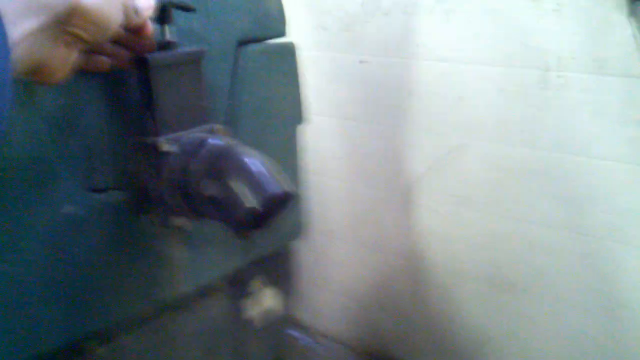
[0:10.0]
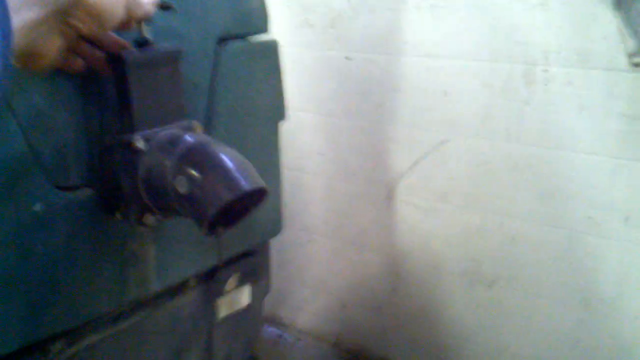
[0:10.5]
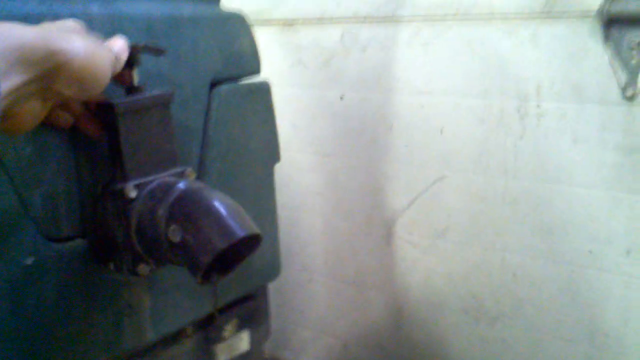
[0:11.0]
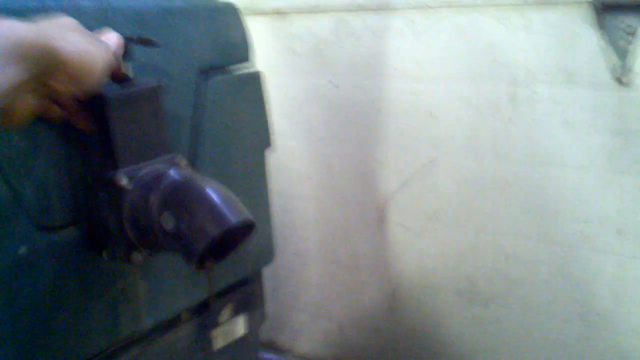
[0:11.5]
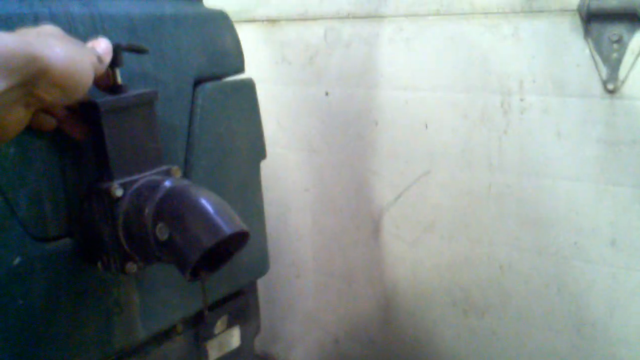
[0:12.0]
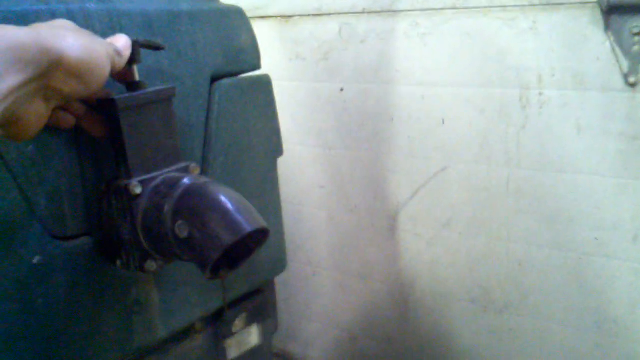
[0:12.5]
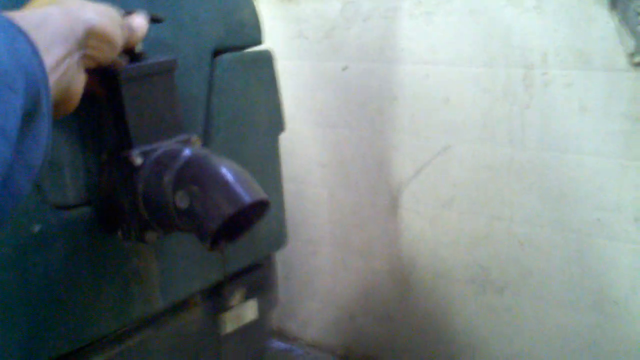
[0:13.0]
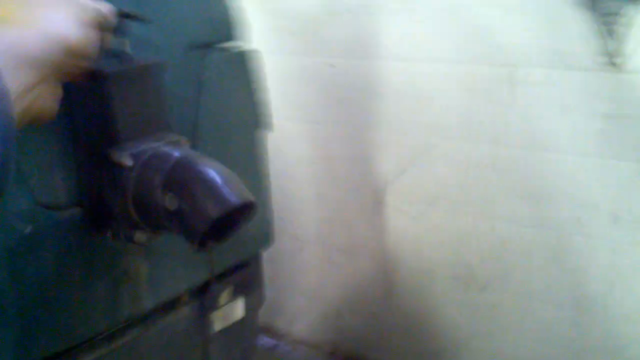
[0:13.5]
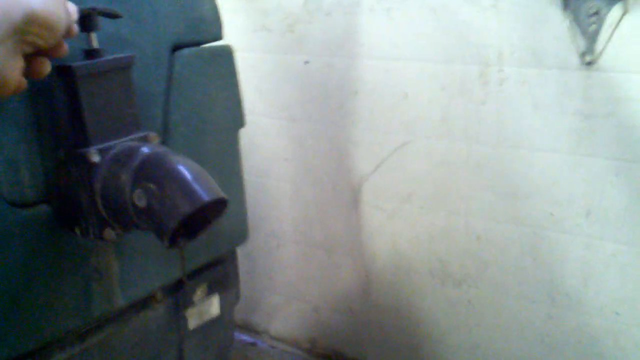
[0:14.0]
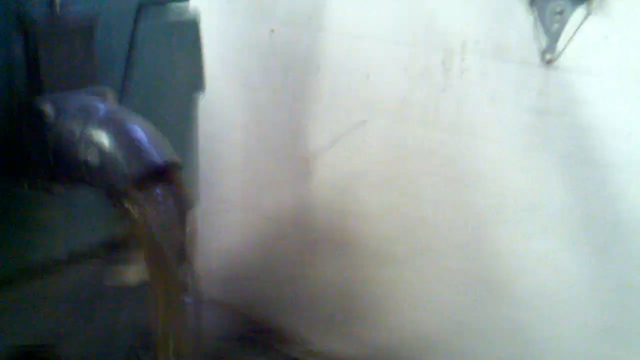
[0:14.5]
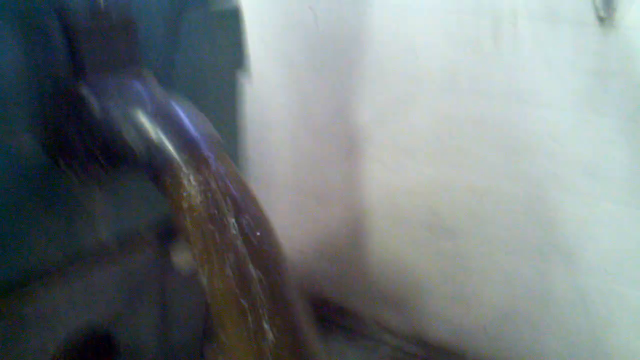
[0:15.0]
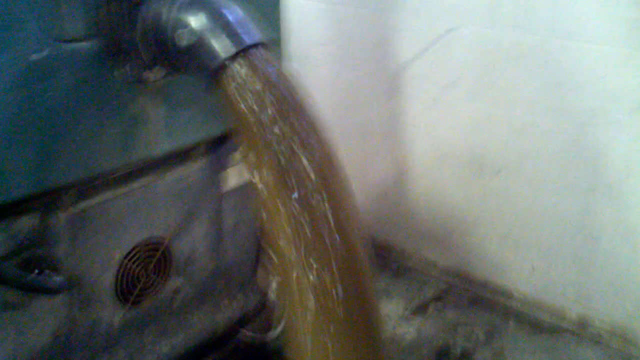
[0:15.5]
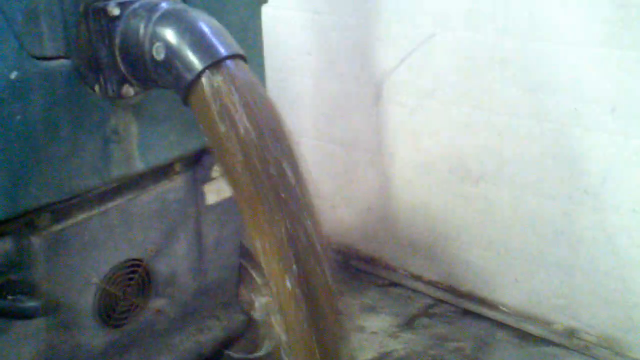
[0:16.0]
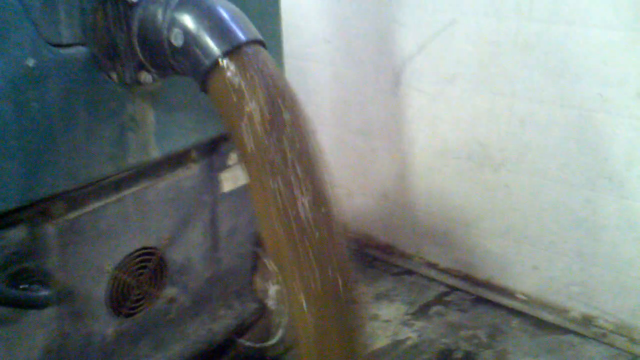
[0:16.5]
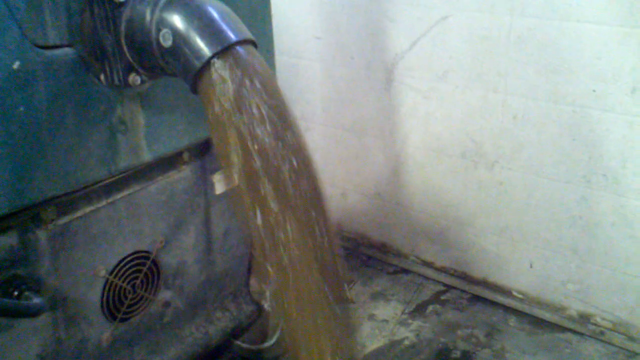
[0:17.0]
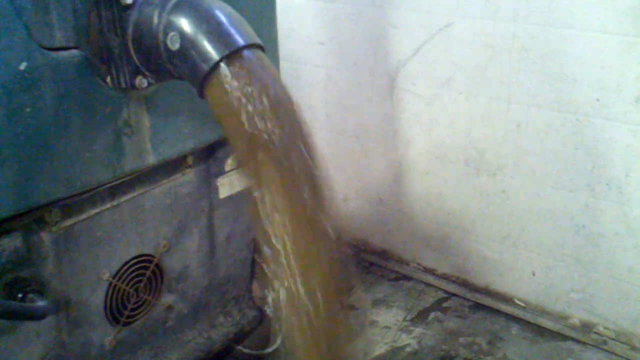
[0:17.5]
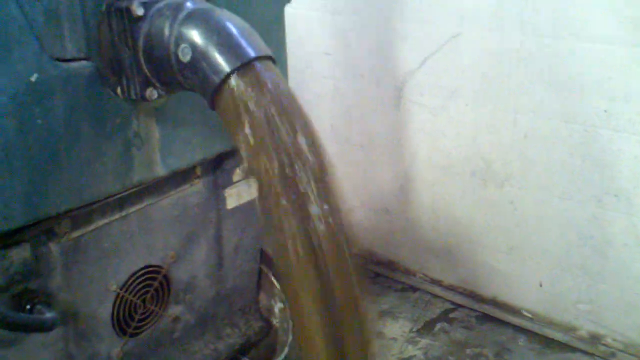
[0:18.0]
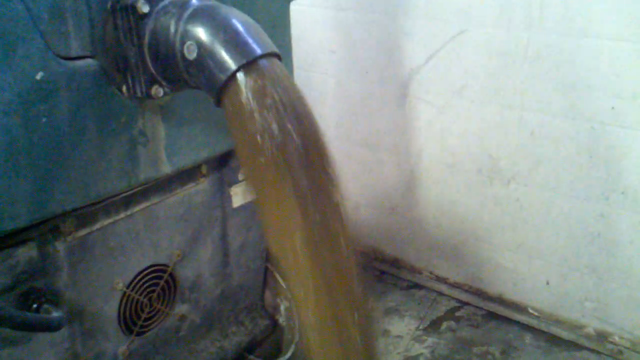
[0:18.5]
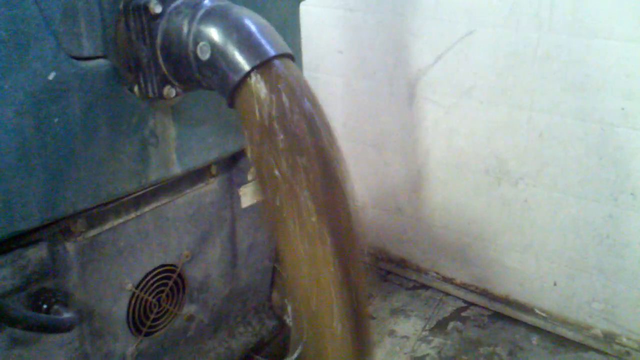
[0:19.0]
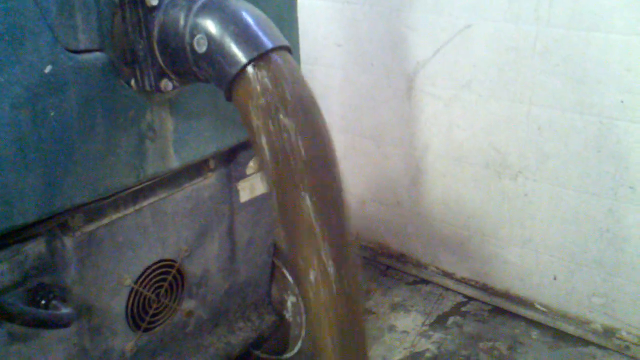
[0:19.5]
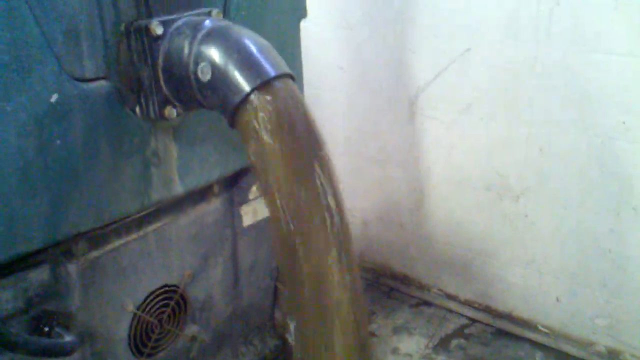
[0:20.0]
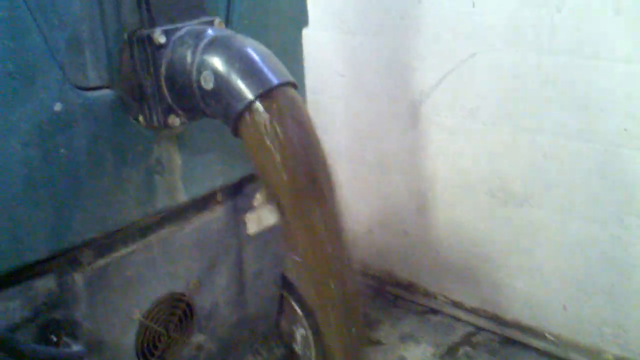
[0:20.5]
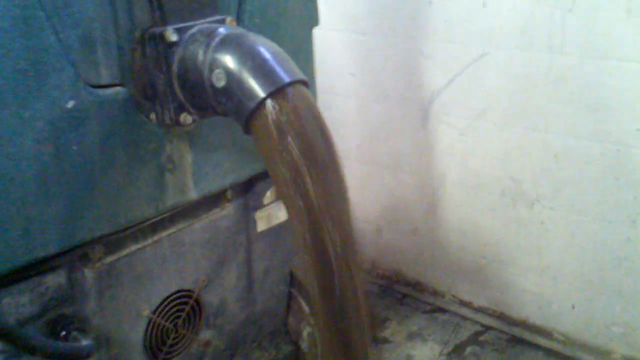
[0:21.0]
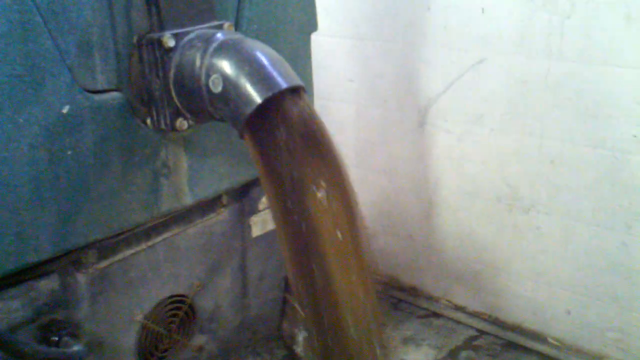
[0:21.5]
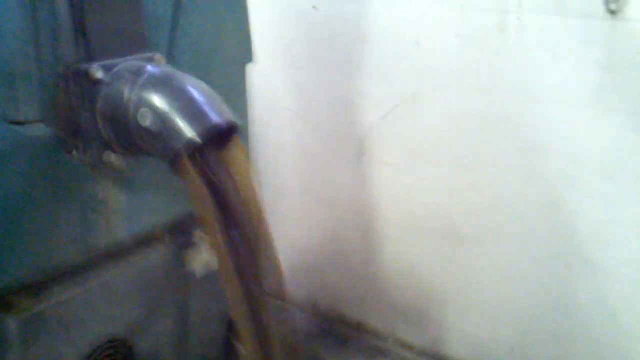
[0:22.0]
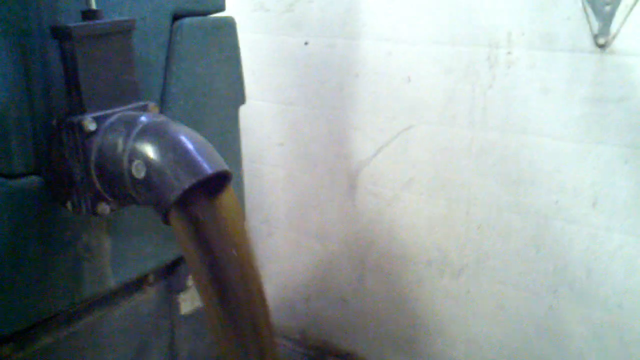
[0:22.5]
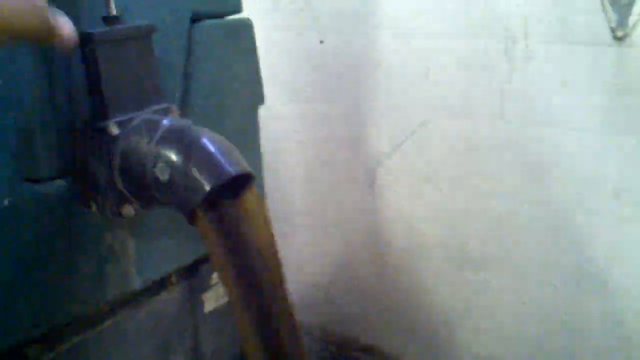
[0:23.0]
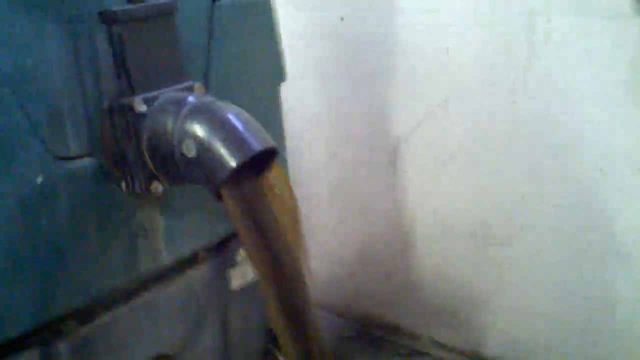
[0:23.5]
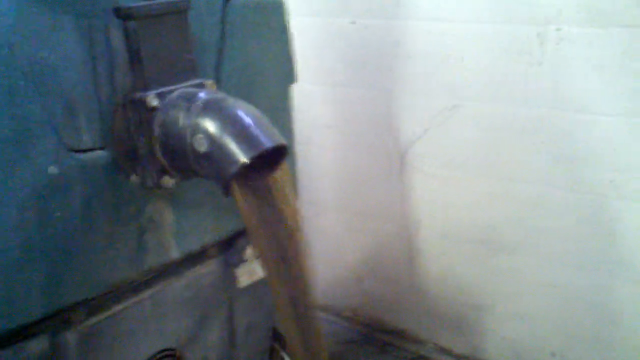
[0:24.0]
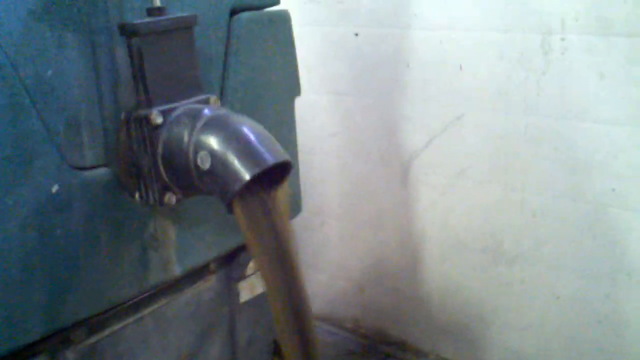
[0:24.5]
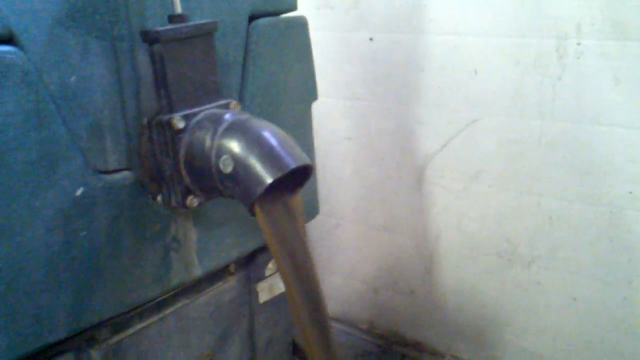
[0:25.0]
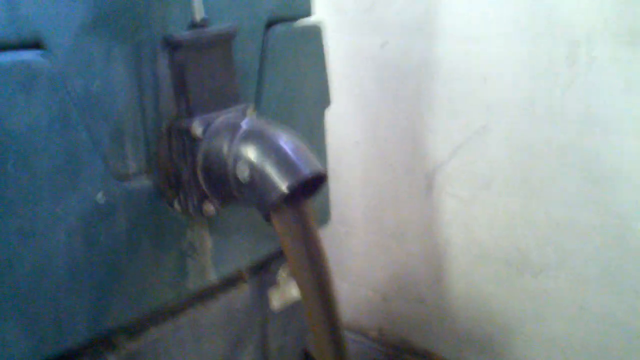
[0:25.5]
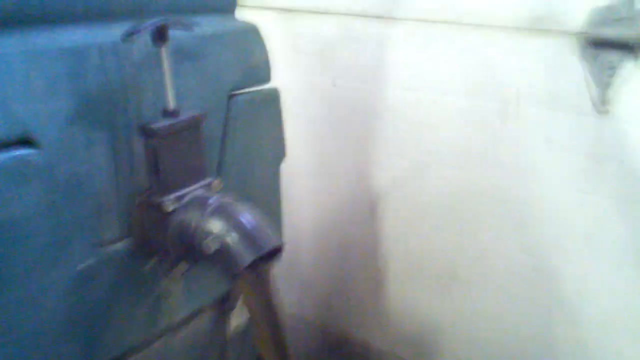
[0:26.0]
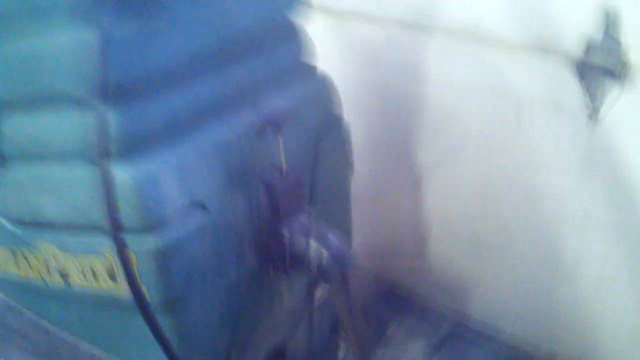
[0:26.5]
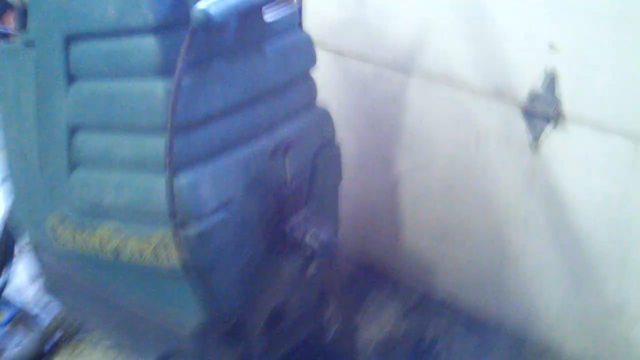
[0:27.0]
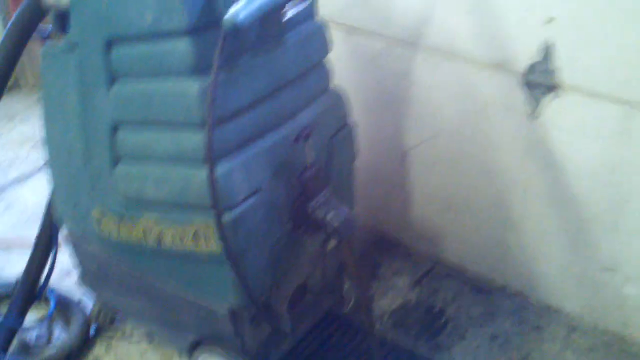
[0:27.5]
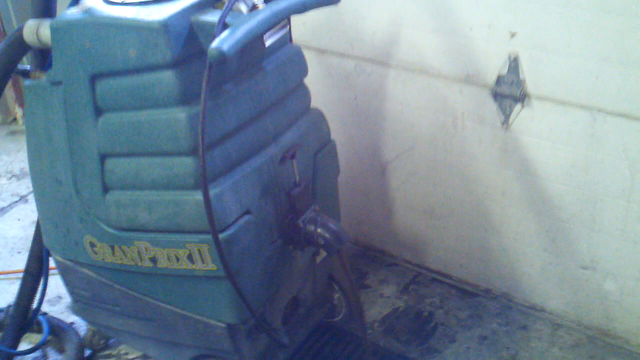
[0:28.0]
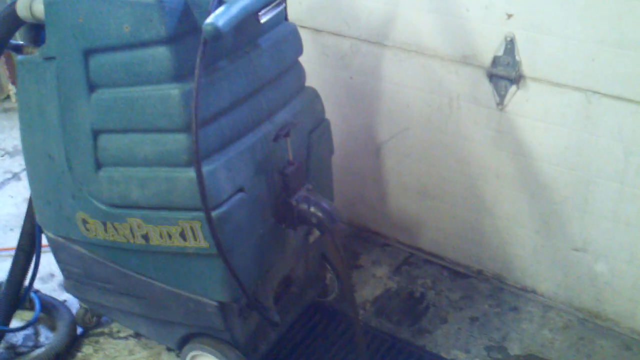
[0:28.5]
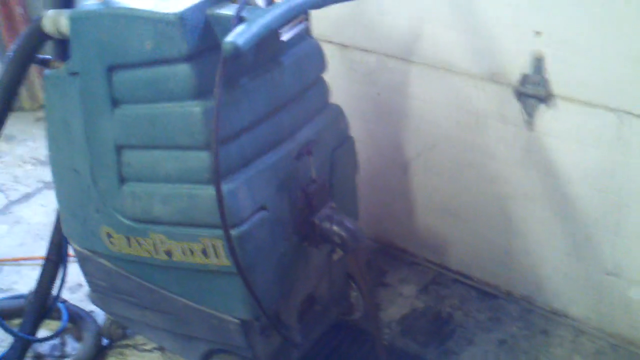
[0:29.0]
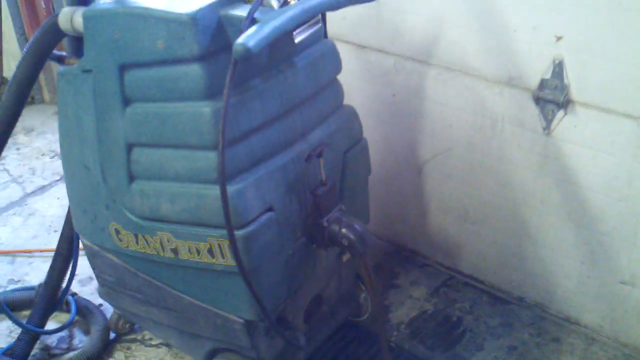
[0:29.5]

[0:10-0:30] A large tank-like object is on the left, with a black spigot on its side and a dial at the top of the spigot. A person reaches in with their fingers and lifts the dial, which is actually a black handle that lifts up and down. As they lift it, dark brown liquid begins to pour out of the spigot on the side of the large dark blue container. As the video pulls out, the dark blue container and its spigot appear to be part of a large vacuum machine, like an industrial carpet cleaner or floor vacuum, so the liquid pouring out is apparently dirty water sucked up from cleaning carpets or floors.